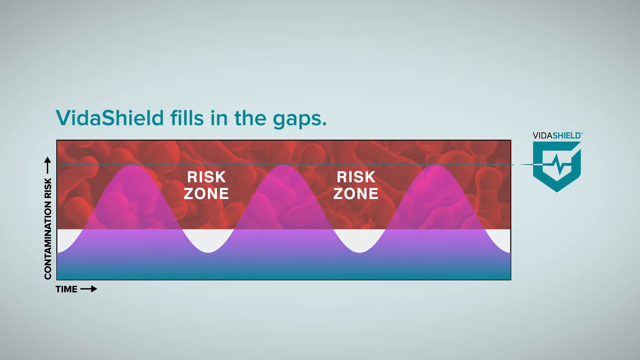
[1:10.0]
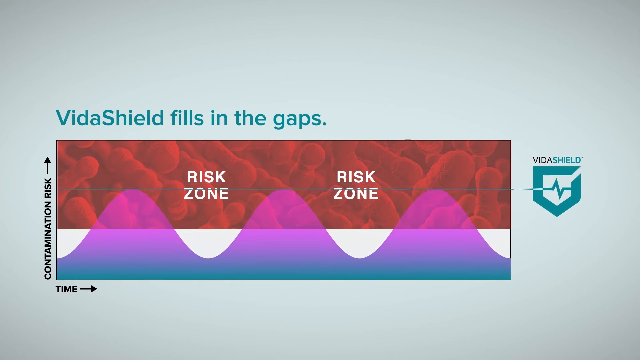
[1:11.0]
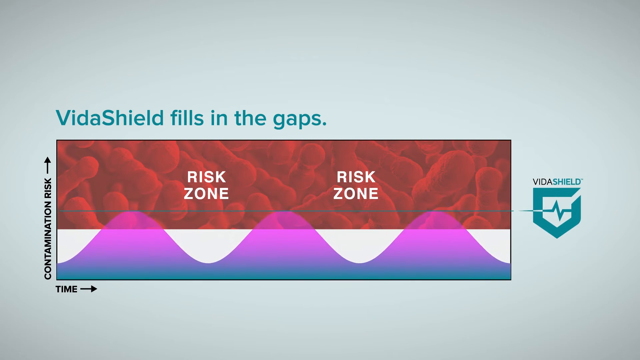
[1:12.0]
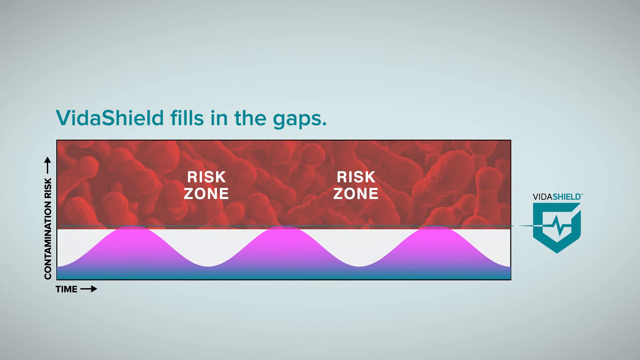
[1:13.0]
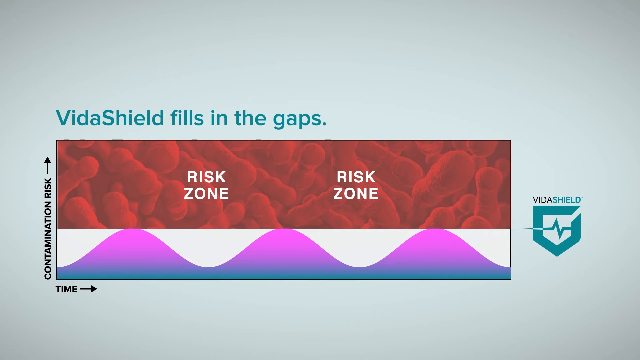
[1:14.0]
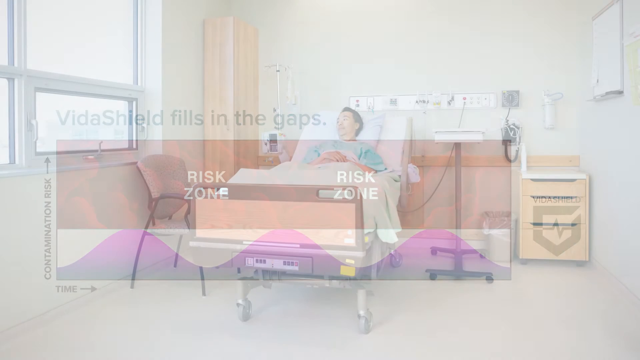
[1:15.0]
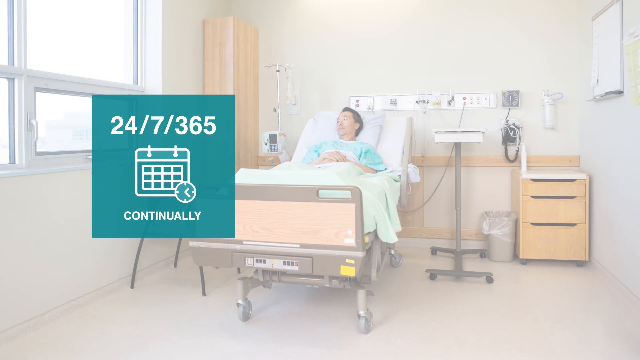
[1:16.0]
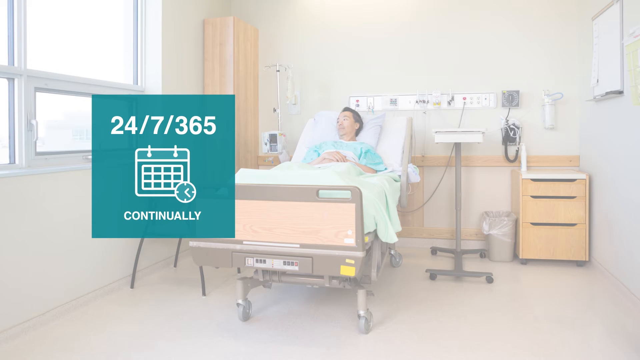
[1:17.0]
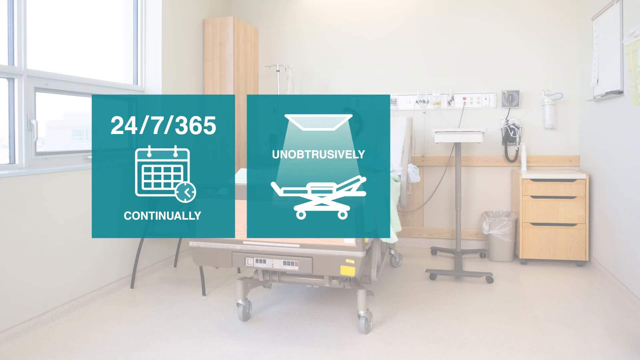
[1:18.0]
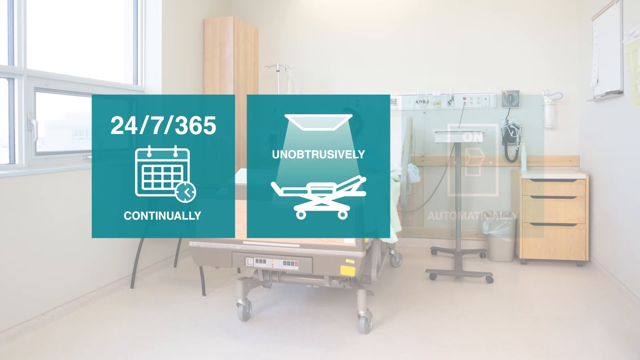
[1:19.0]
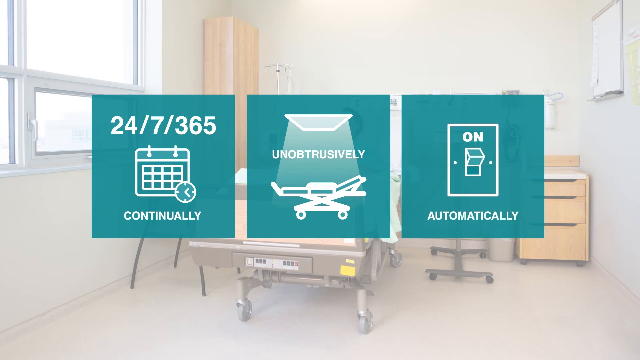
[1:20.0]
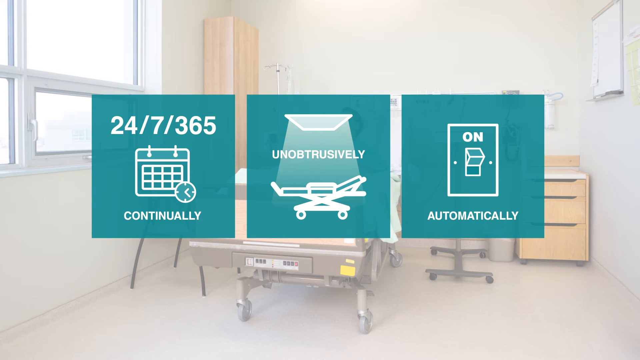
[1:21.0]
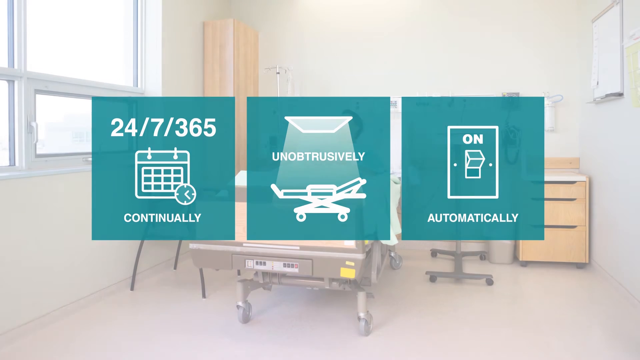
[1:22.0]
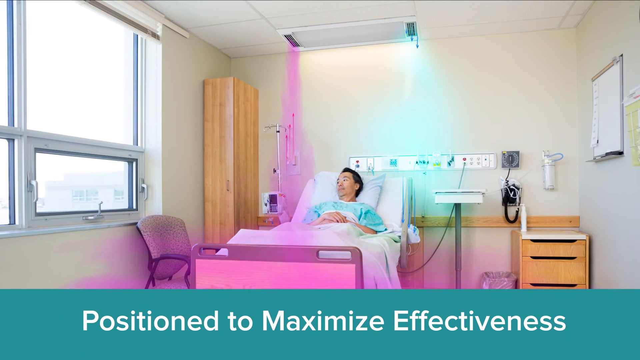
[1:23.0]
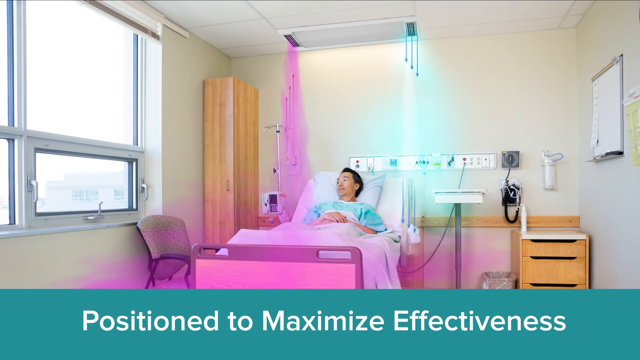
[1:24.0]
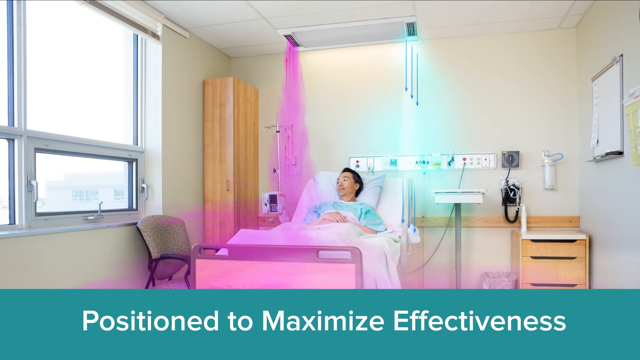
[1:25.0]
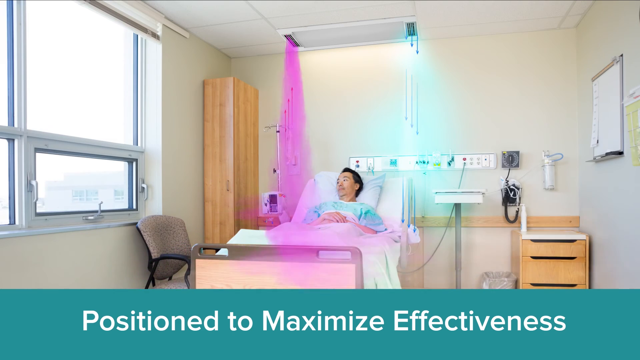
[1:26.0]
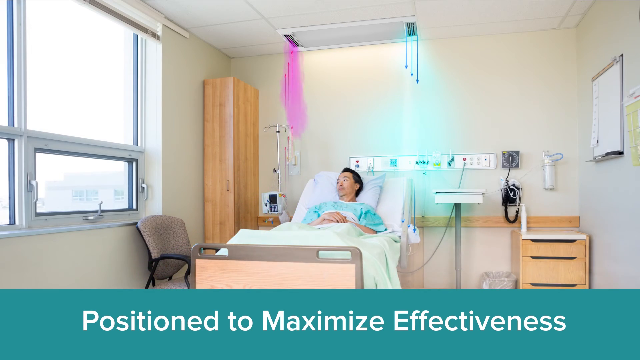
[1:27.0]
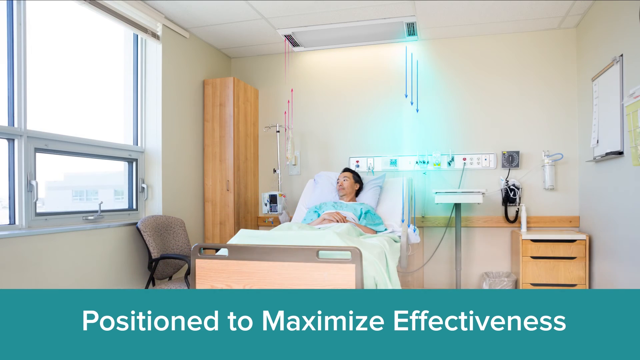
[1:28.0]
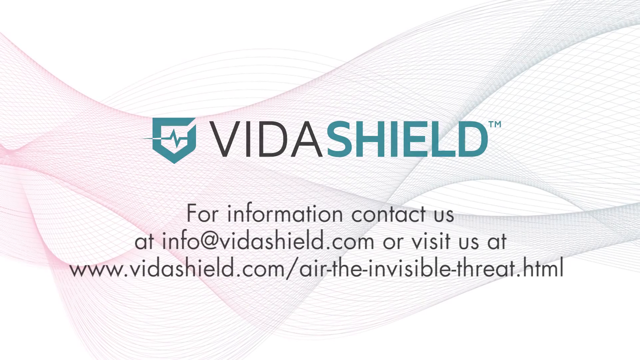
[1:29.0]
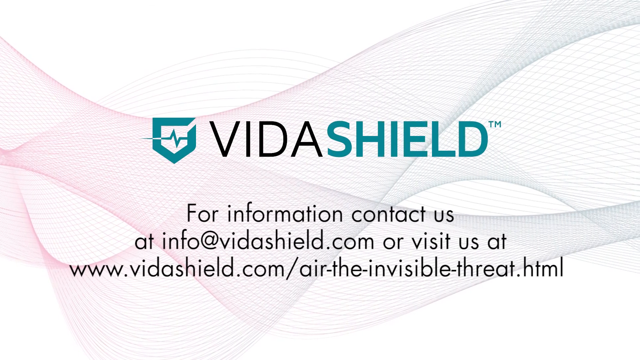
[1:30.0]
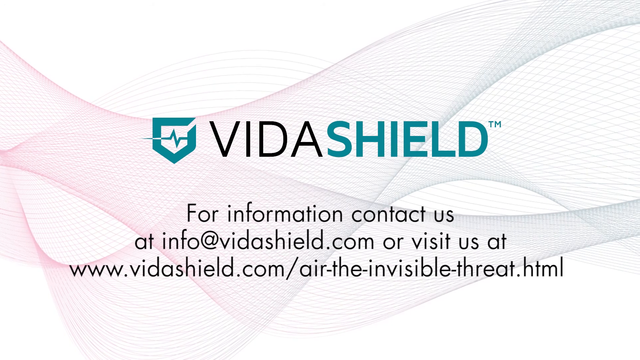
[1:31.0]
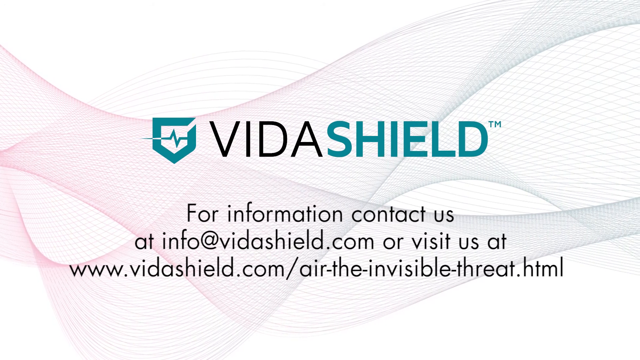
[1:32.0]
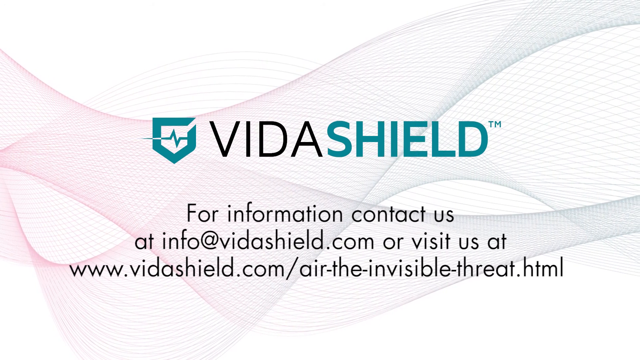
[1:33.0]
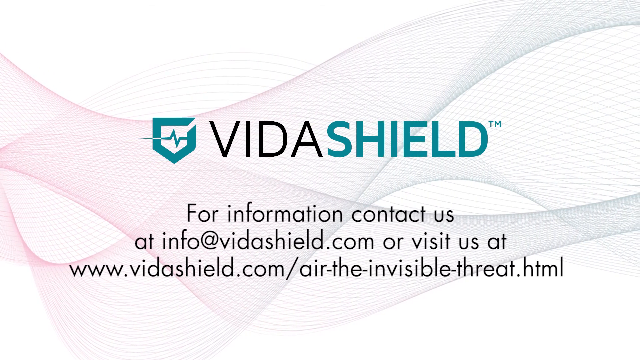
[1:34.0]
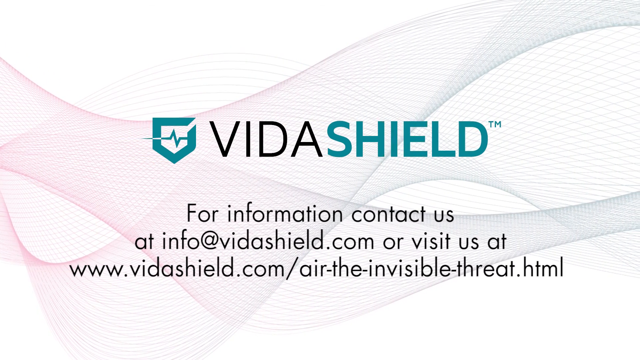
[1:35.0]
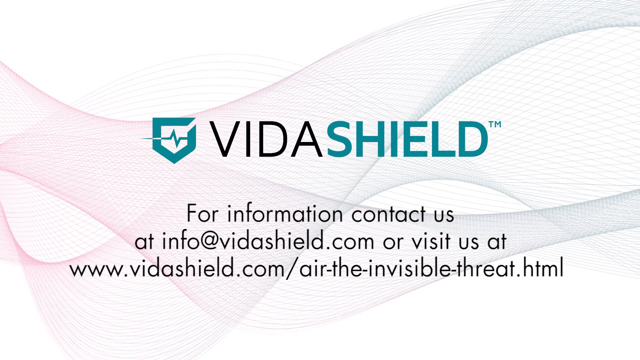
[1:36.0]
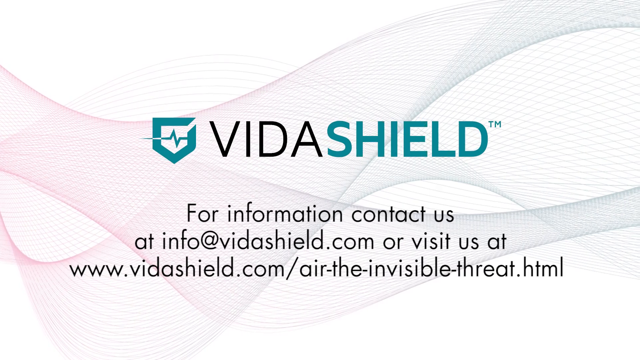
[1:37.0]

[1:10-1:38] Text says "VitaShield fills in the gaps," and a simple diagram labeled "brought to you by VitaShield" appears. To the right is a blue shield with "risk zone" on it. A graph shows a wavy line, with "contamination risk" on the left and "time" at the bottom. Over time the line rises and falls like a bell curve three separate times, with the risk zone in between. Then a line compresses the zone so the peaks are not as high, apparently cutting it to about half. Next, a man in a blue patient outfit is in a hospital bed, looking out the window, with nobody else in the room. In the far corner is what looks like a stand-alone wardrobe closet, various instruments are to the left, and there are some plug-ins in the back. Text says "24-7, 365," and a green box says "continually" with a calendar around it. To the right of "continually" is "unobtrusively," with a clip-art patient bed. Then another green box reads "automatic" and shows a light switch turned on. Arrows go up to the top, showing the purple smoke from the affected person rising into the air ducts, and a blue arrow comes back down. Text at the bottom says "position to maximize effectiveness." The video ends with VitaShield and "for more information contact us," along with an email address, info at VitaShield, and a website.